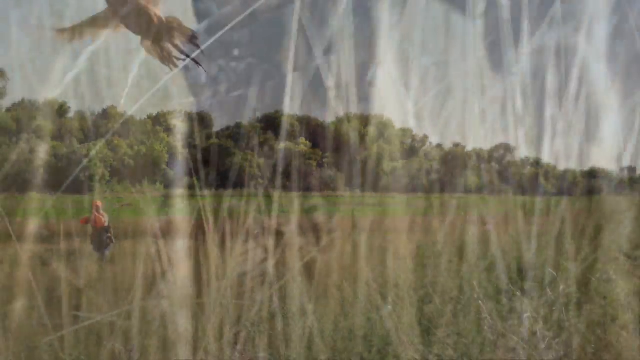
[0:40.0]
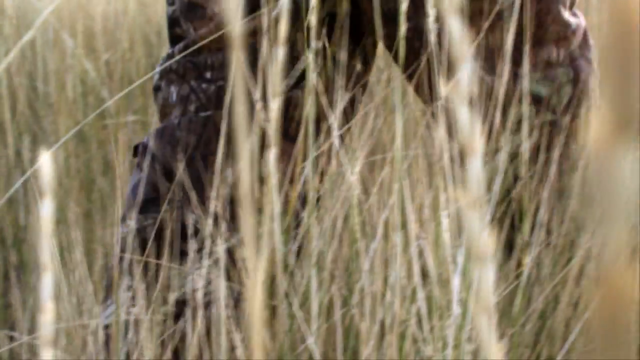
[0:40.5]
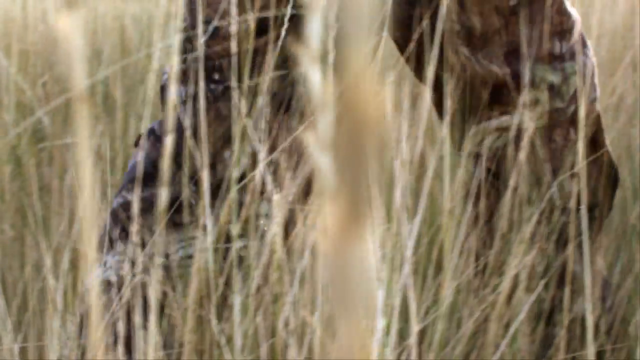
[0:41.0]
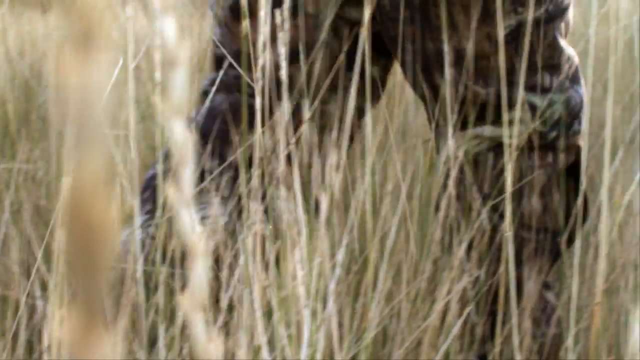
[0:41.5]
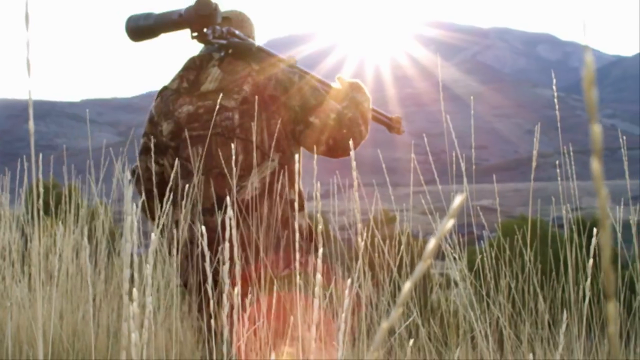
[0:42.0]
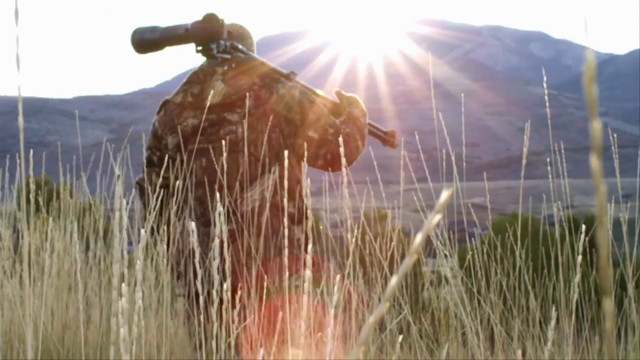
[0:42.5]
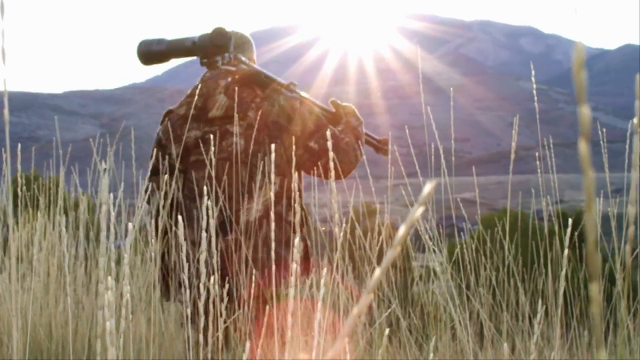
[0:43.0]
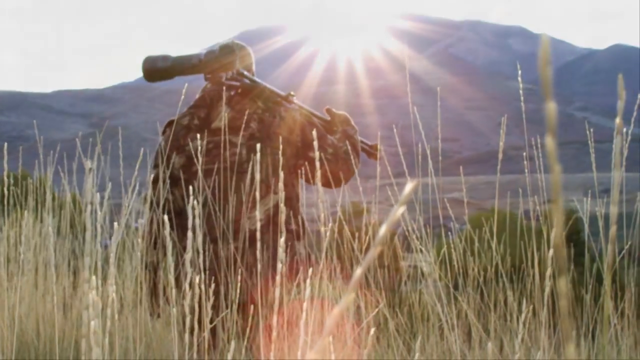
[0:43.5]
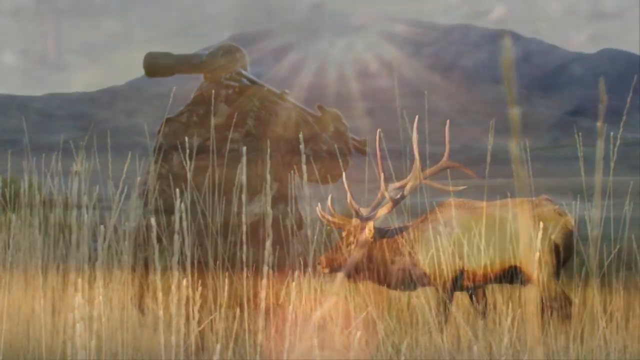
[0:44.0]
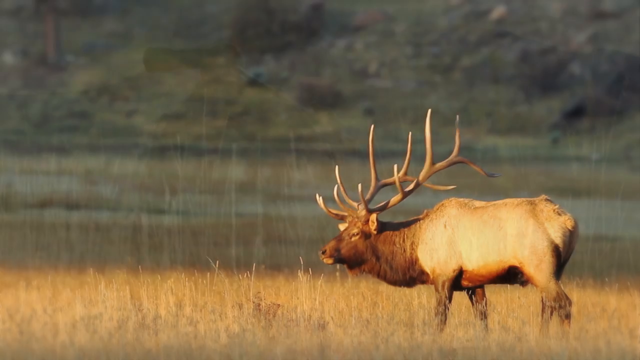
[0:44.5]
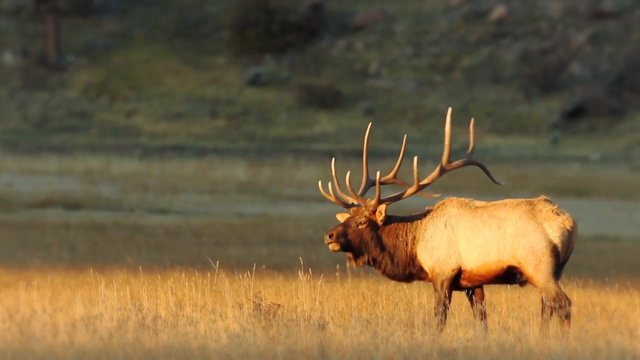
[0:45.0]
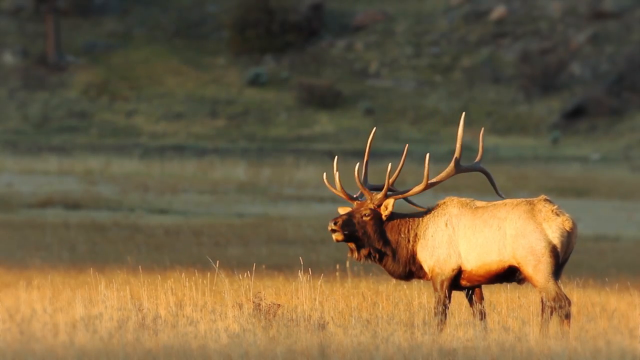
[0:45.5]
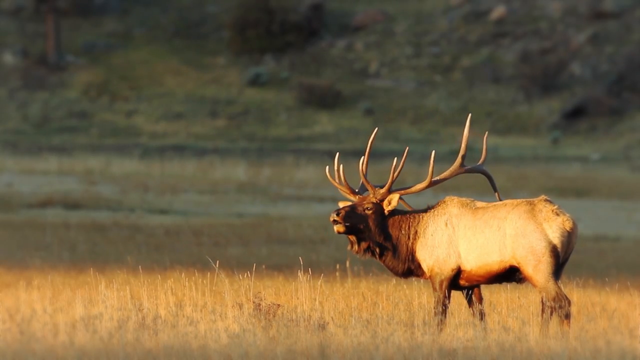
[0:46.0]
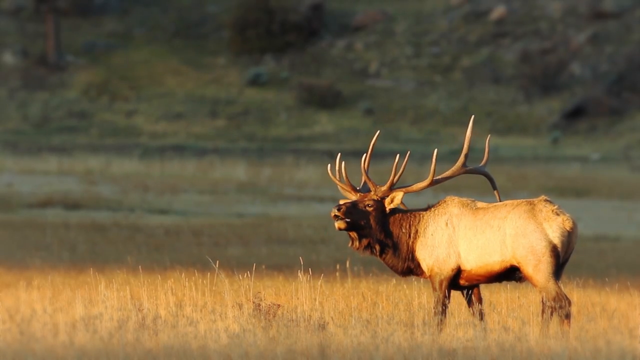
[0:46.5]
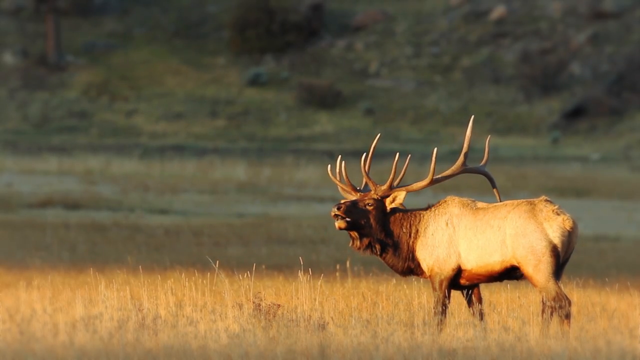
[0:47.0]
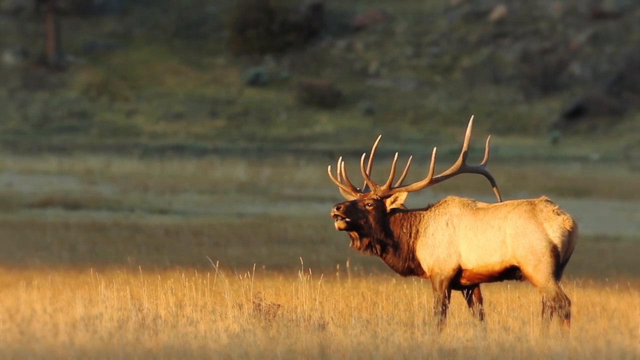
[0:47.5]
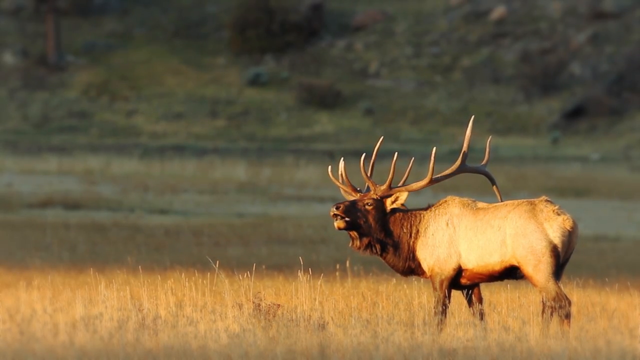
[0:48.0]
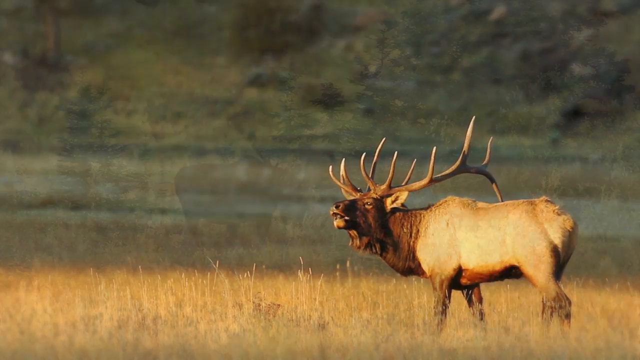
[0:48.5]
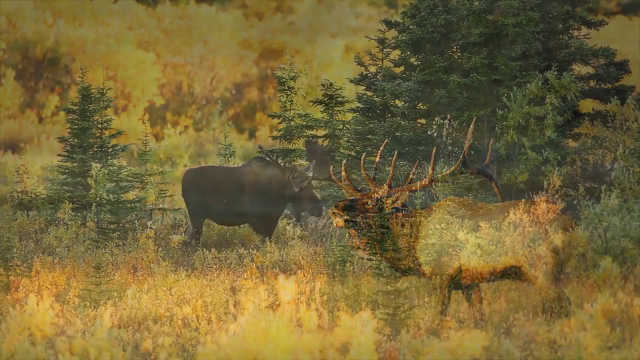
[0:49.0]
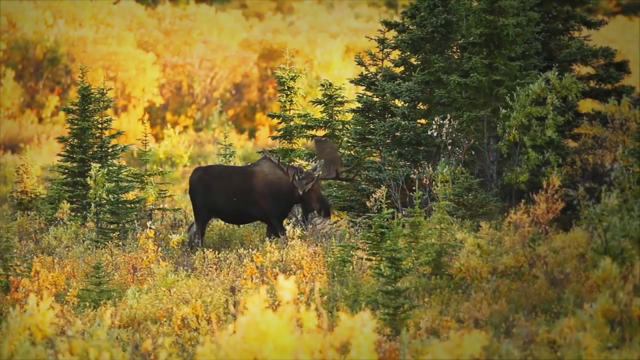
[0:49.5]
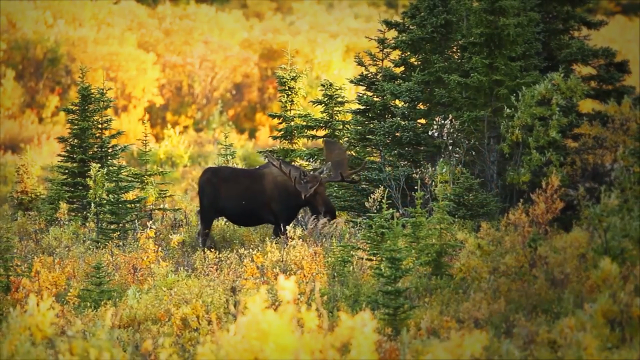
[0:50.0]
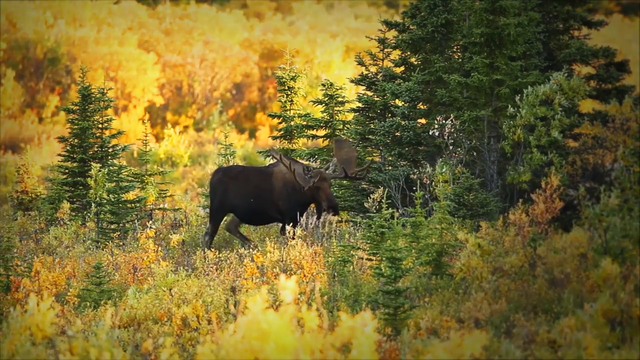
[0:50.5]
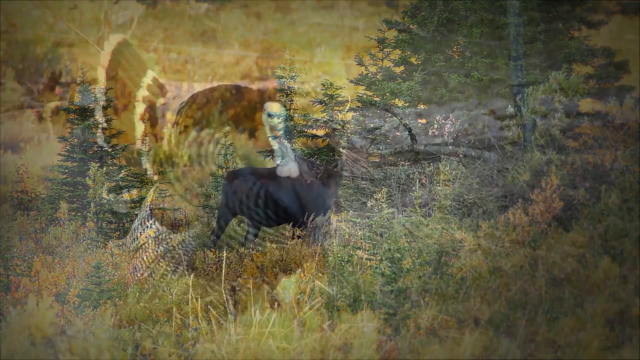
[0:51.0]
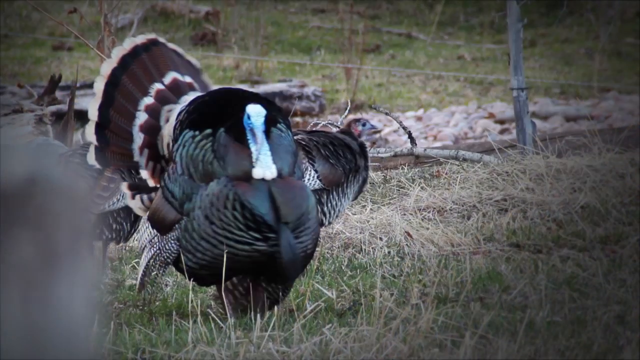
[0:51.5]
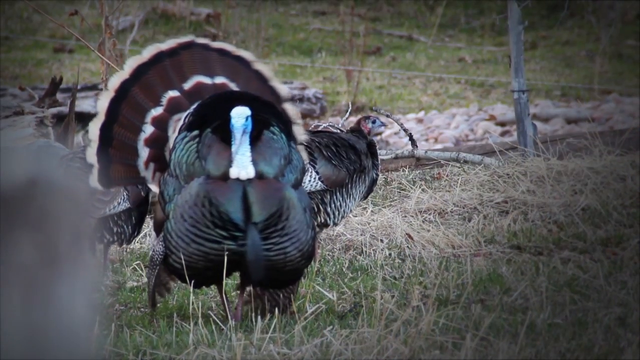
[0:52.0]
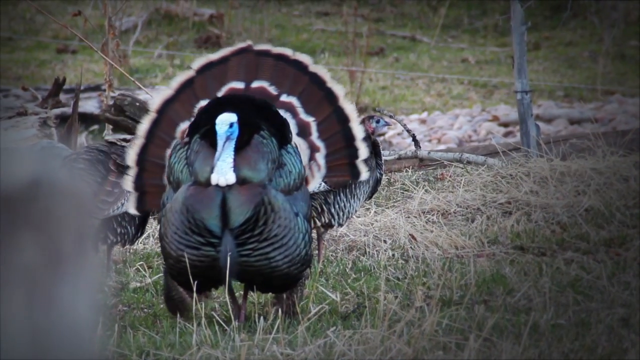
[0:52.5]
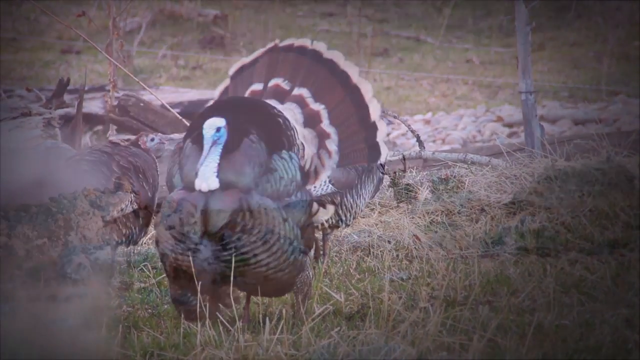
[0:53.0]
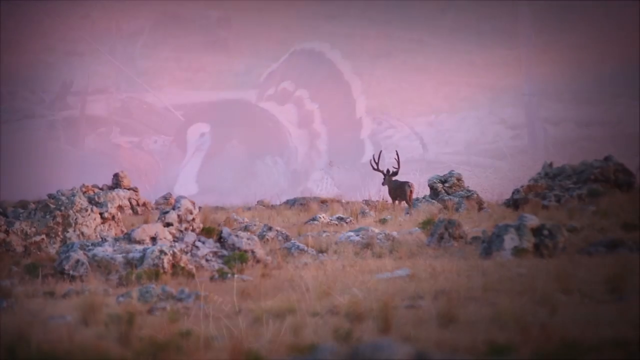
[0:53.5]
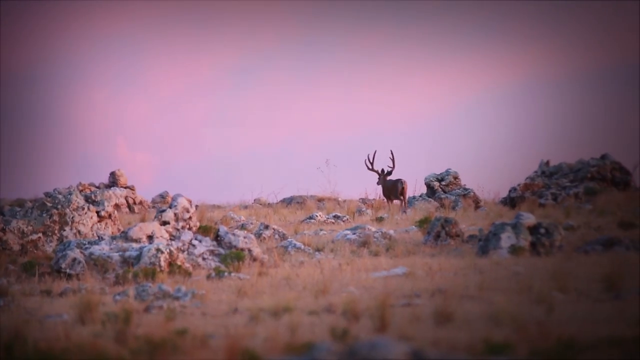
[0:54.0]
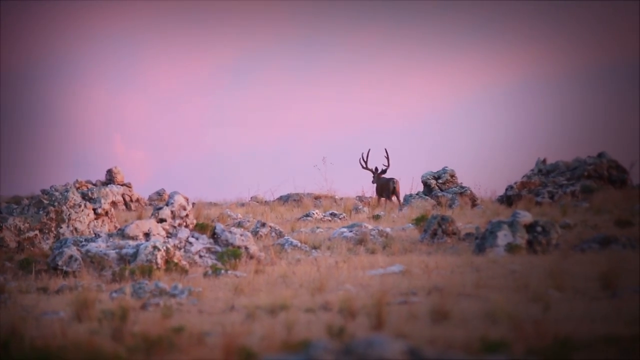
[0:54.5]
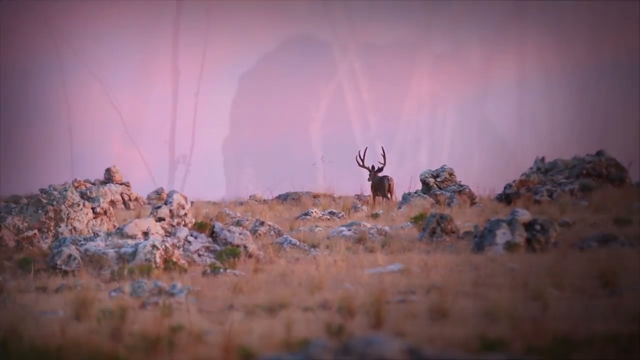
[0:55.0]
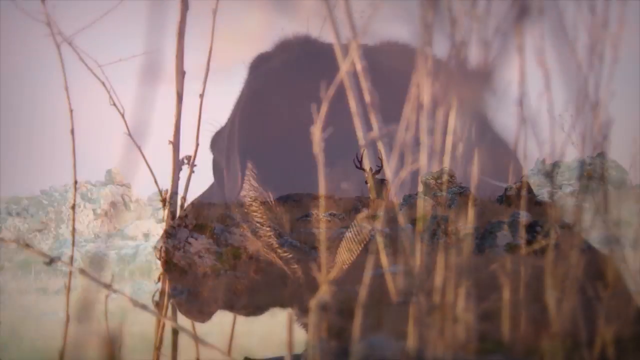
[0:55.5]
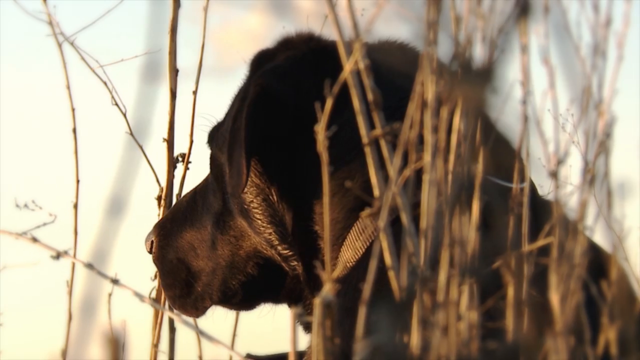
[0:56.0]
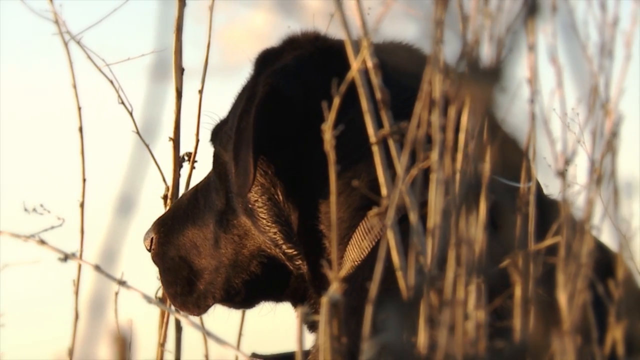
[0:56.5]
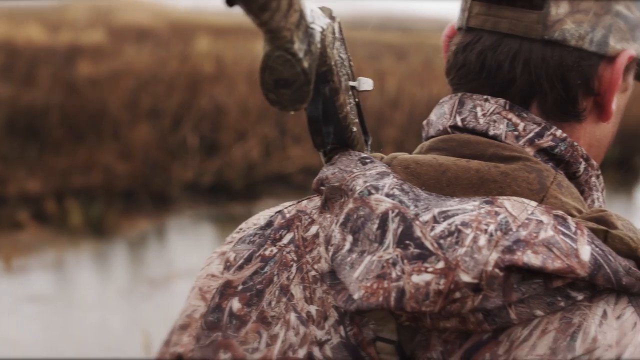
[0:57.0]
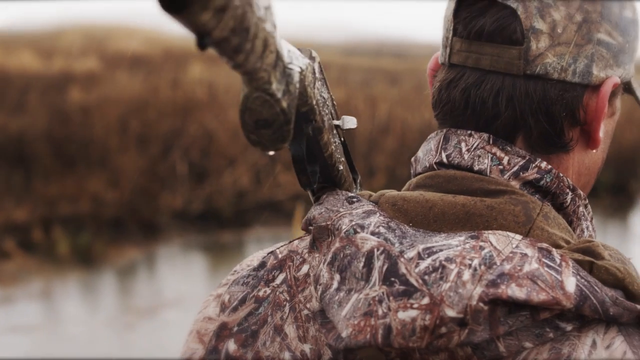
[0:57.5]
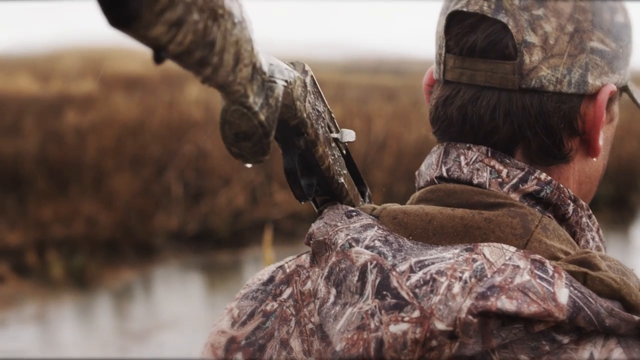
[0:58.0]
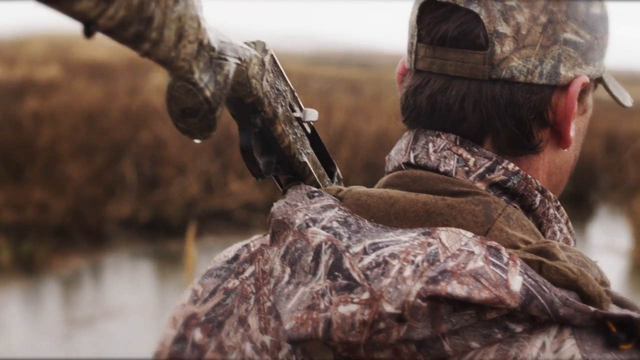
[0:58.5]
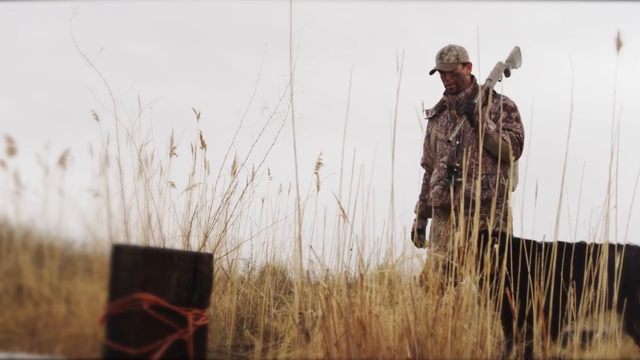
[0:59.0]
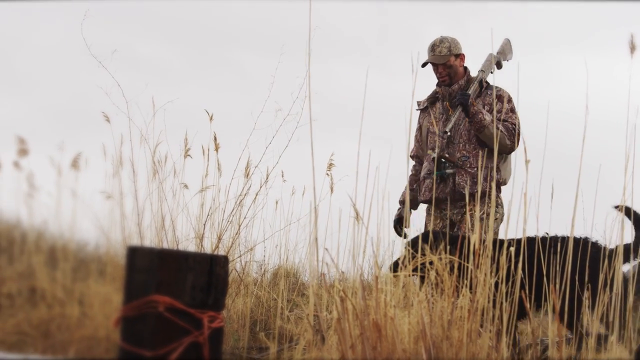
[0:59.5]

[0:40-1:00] A man now wears a camouflage outfit resembling an army outfit. A giant moose appears, with an antler that looks like a giant branch on its head; it is very big and looks like a male. It has two clearly defined colors: its body is very light, while from the neck to the head it is very dark. The huge moose walks through the forest. A big turkey then appears with its feathers spread open; its feathers are all very dark black and its beak is bluish. The moose is shown walking at a distance, and the hunter in his camouflage outfit walks through the forest with his dog.